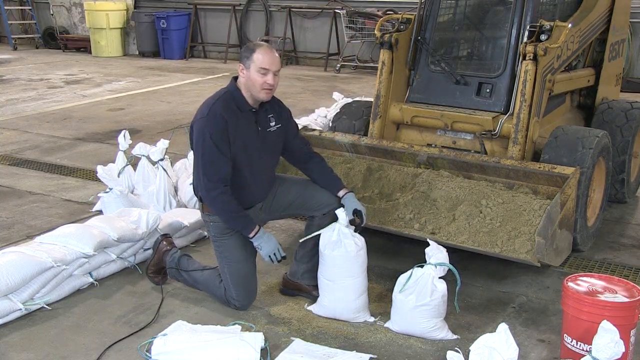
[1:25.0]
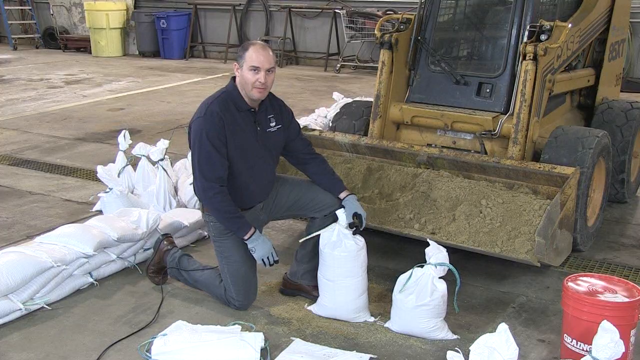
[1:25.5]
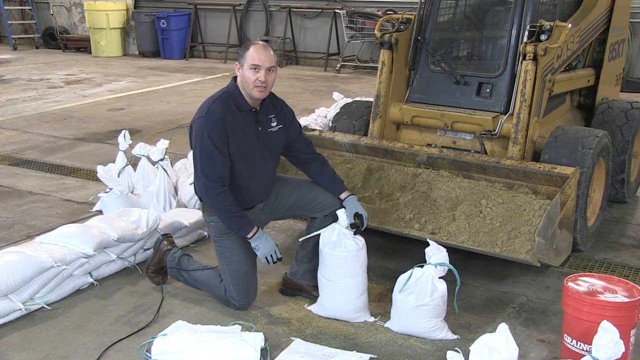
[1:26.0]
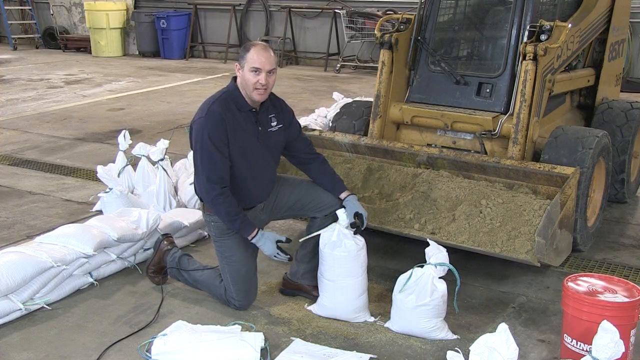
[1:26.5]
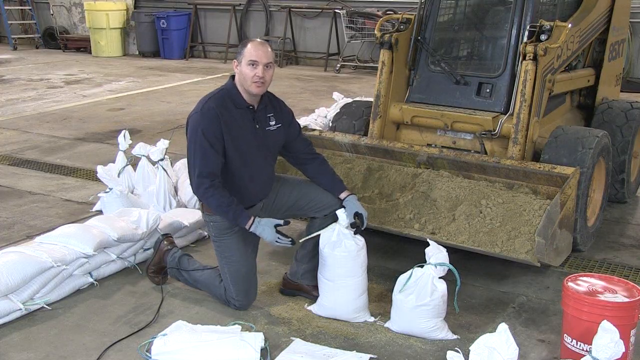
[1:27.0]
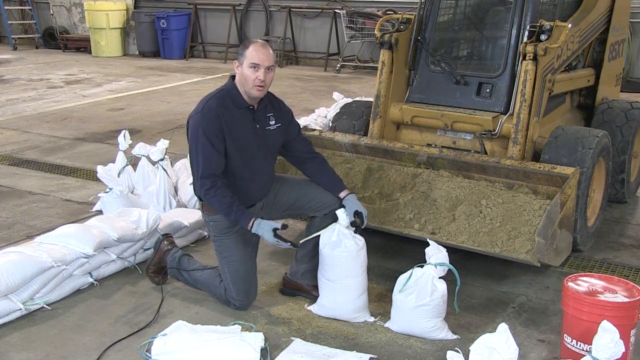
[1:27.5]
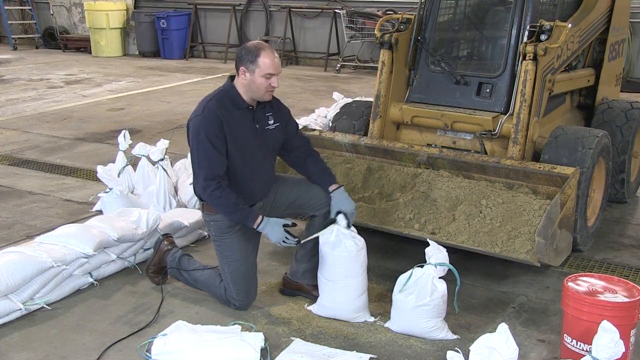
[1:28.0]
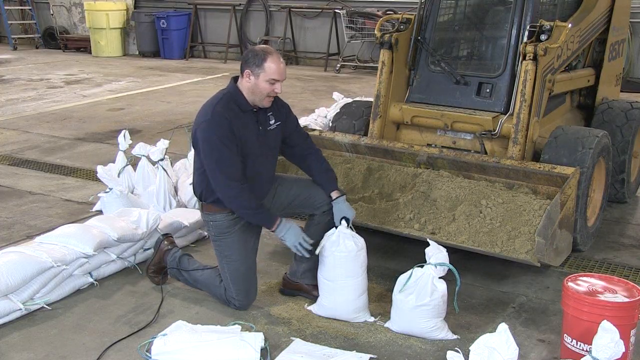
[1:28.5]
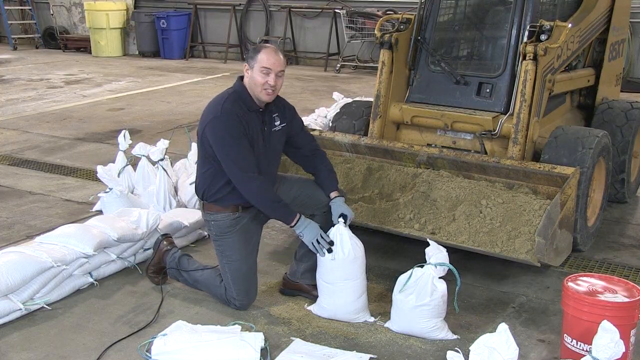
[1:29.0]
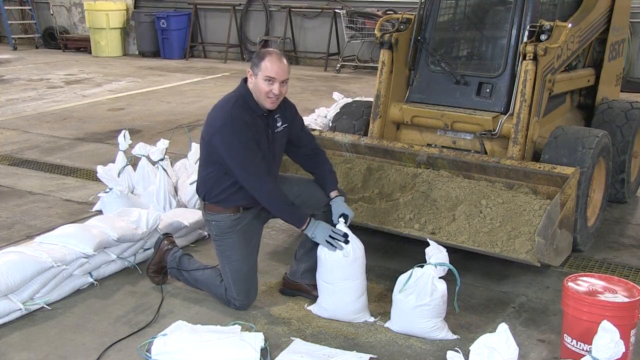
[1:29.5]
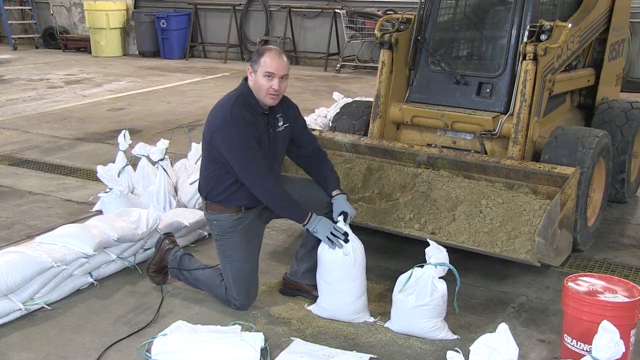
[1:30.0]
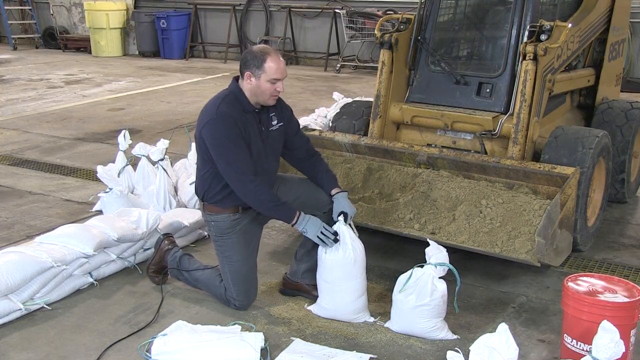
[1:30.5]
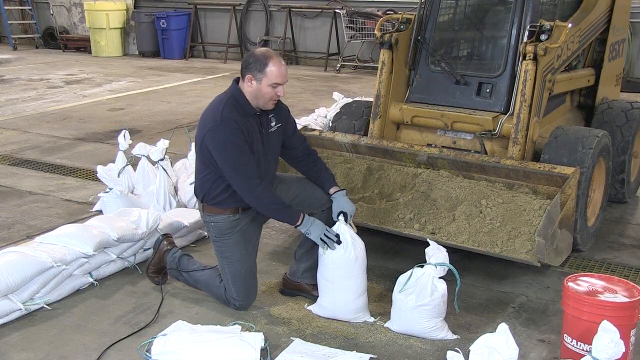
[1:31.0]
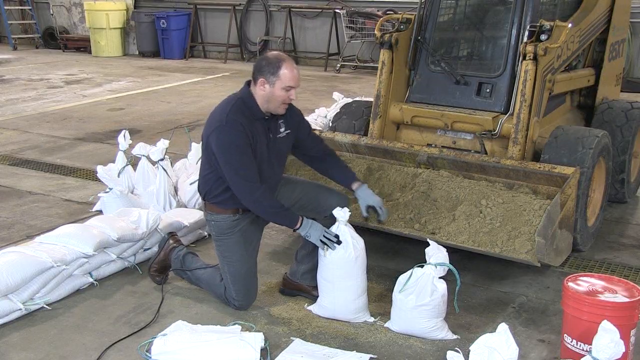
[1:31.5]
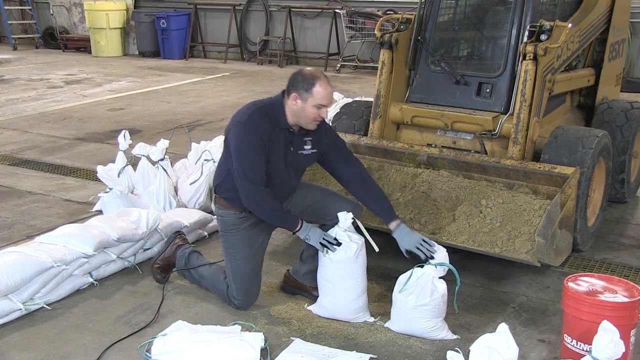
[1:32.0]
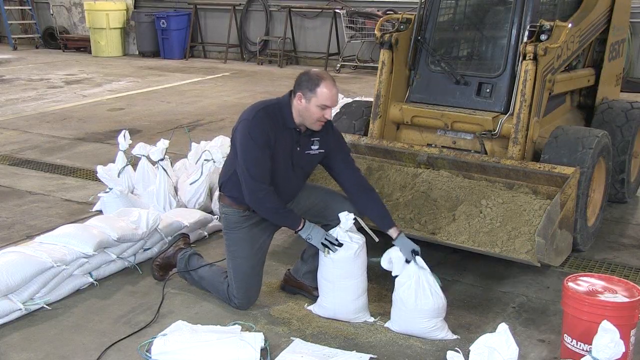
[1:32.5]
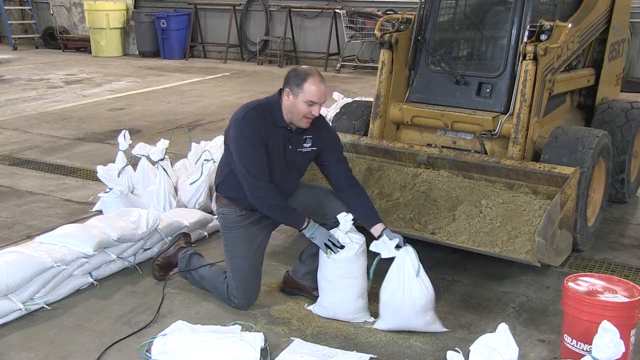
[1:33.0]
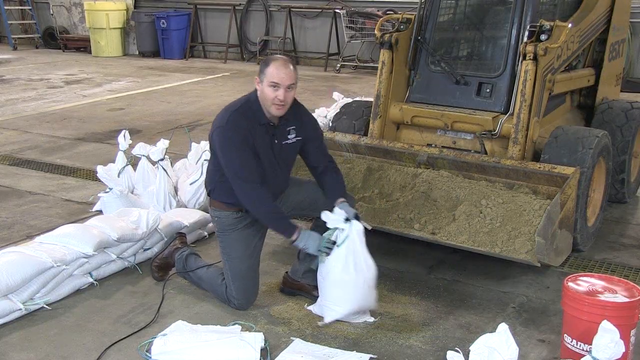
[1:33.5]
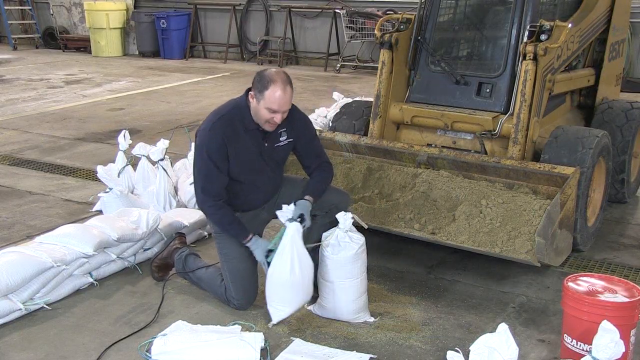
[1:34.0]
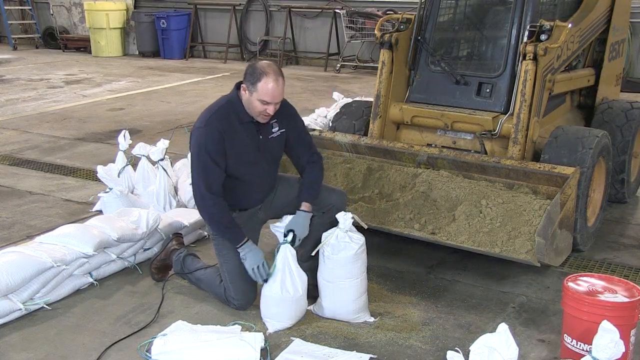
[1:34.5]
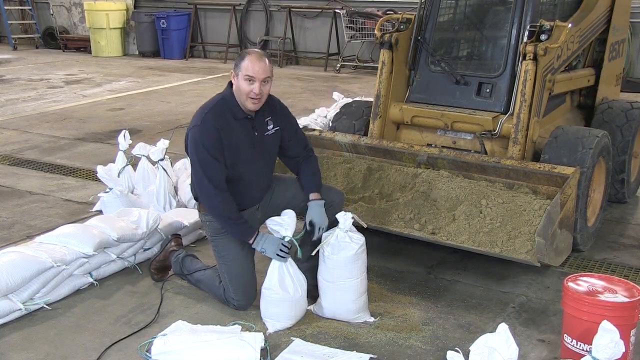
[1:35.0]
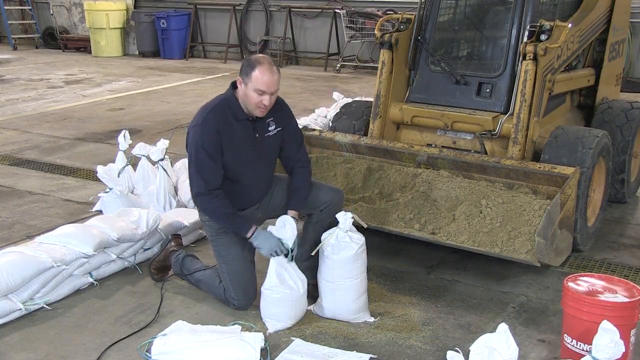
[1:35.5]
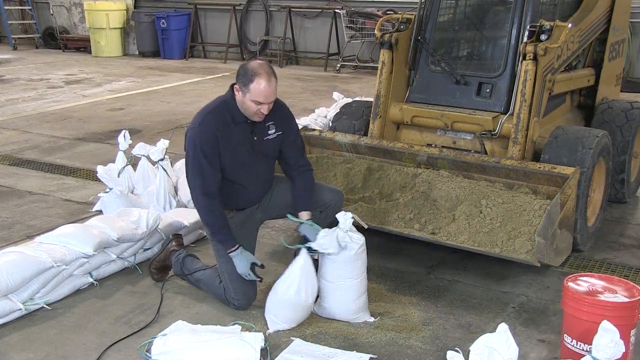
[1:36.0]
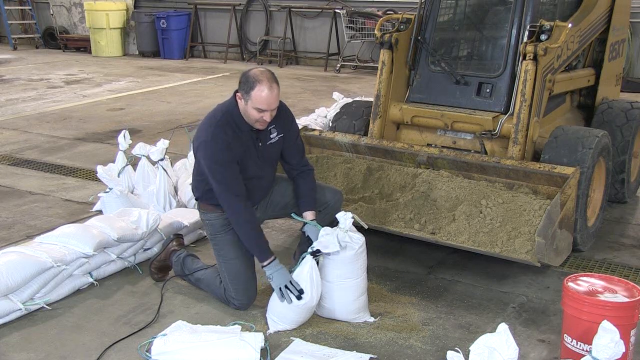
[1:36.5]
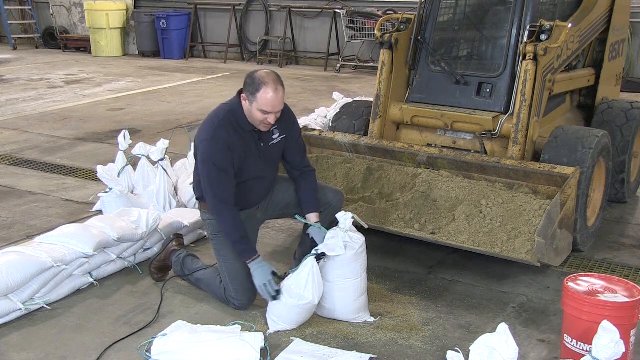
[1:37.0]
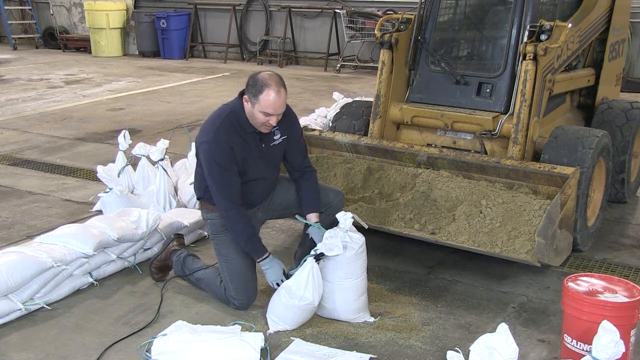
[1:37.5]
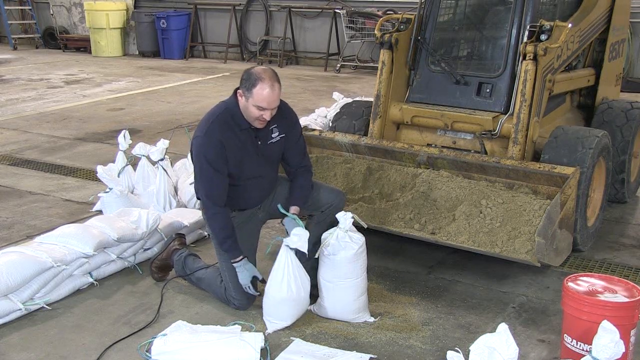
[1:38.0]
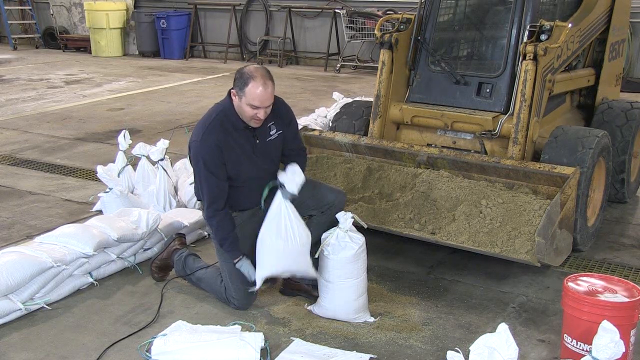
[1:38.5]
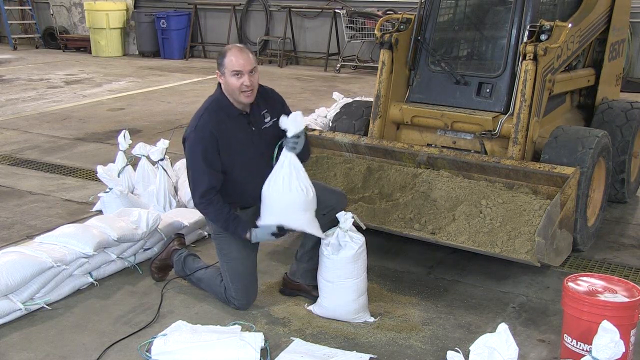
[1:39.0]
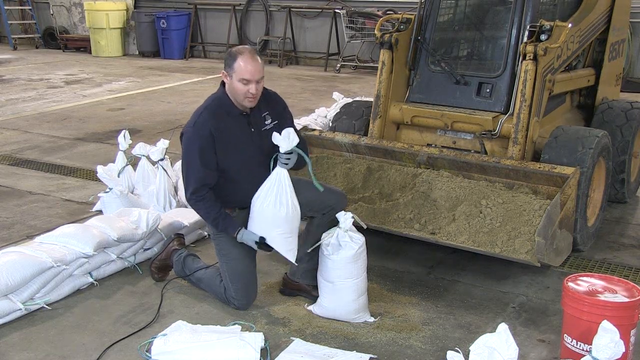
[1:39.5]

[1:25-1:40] Inside the warehouse, the speaker kneels beside two sandbags, one tied with a white tie and one tied with a green tie. The white-tied bag seems to be more full, and he pushes on it while talking to the camera, seemingly indicating that this bag has been filled too much. He then gestures to the green-tied bag, which has been filled only two-thirds of the way, lifts it up and presses on it, seemingly showing it as the more acceptable way to fill a sandbag.